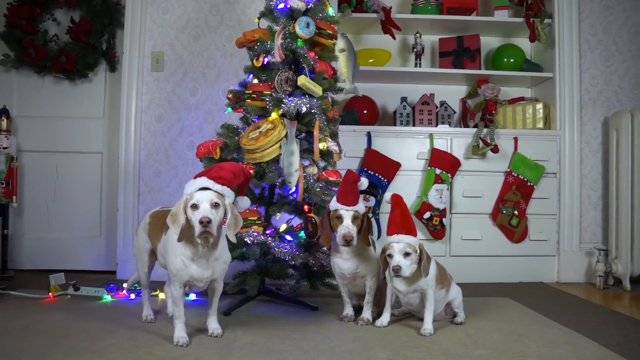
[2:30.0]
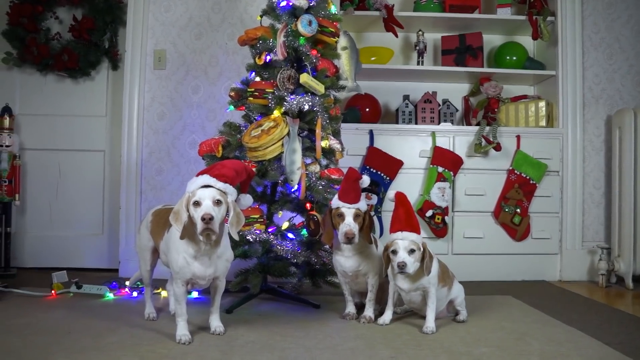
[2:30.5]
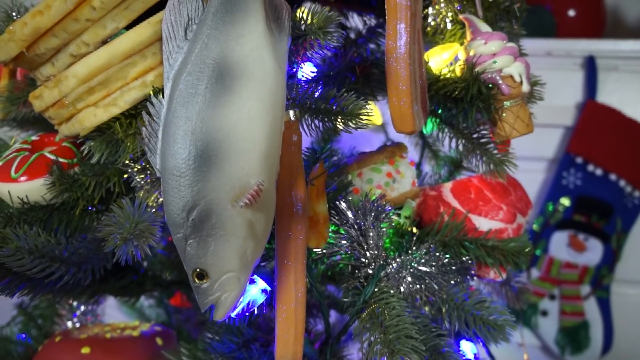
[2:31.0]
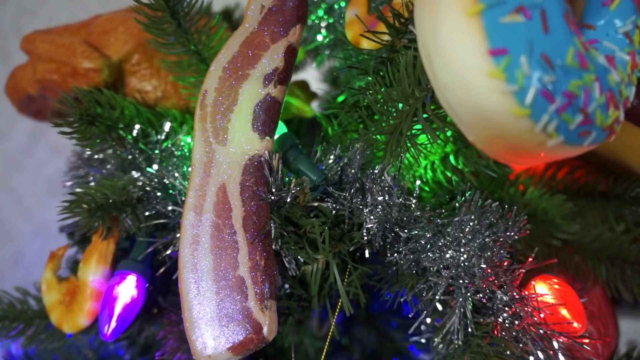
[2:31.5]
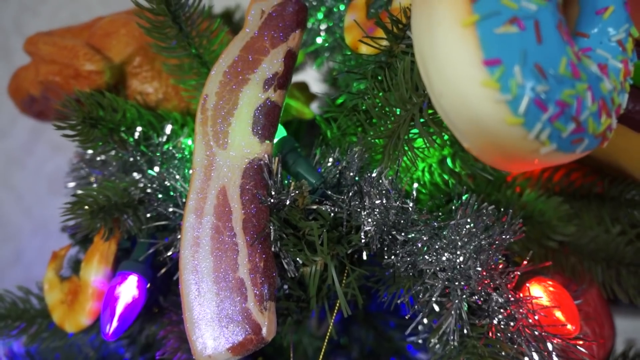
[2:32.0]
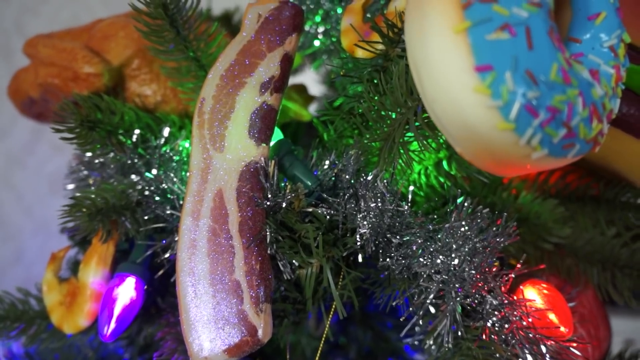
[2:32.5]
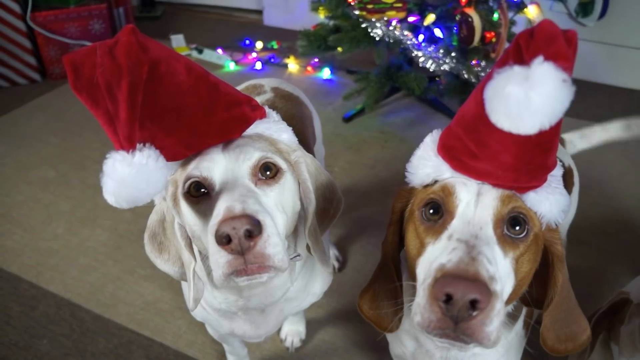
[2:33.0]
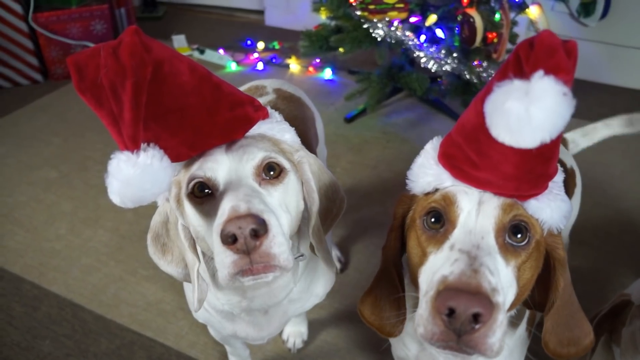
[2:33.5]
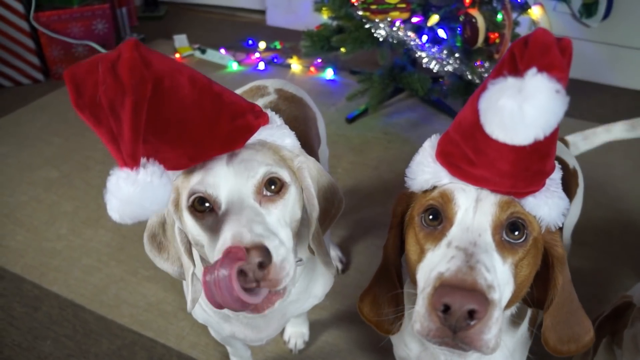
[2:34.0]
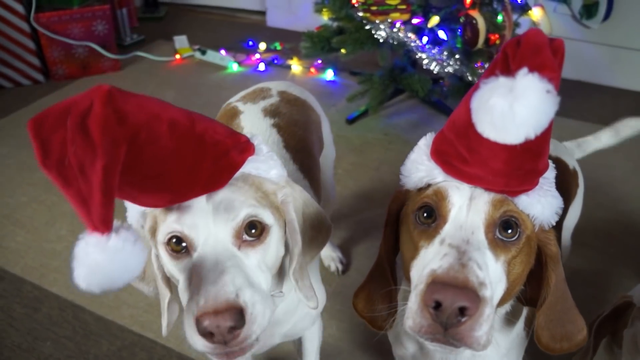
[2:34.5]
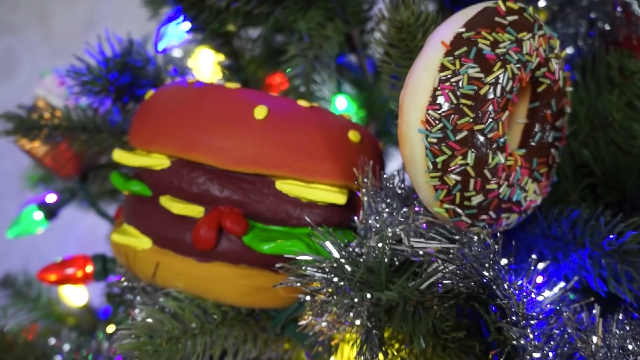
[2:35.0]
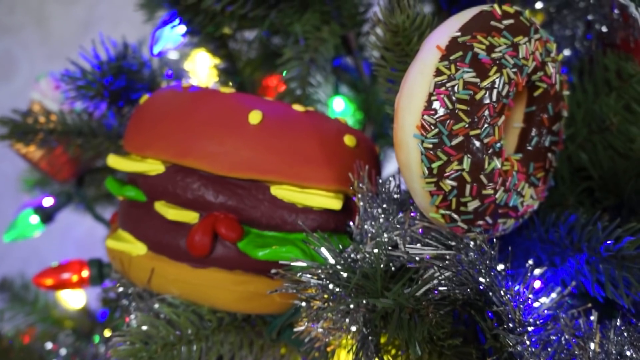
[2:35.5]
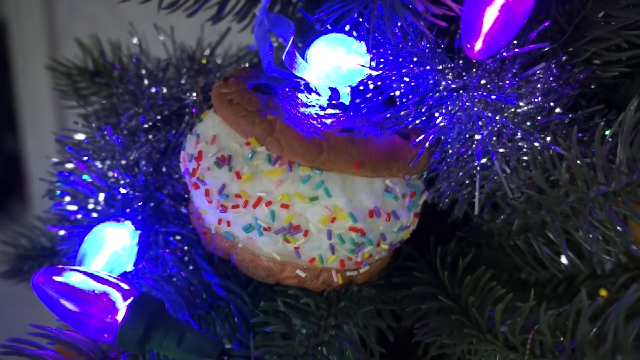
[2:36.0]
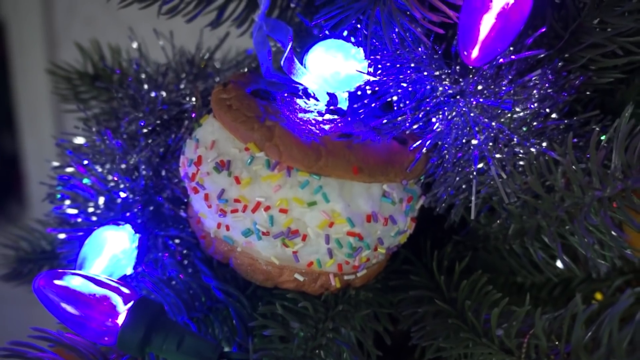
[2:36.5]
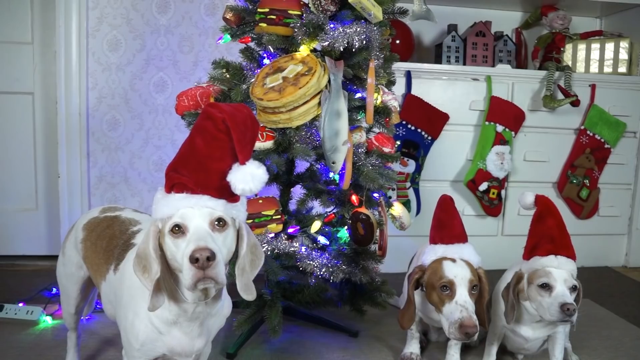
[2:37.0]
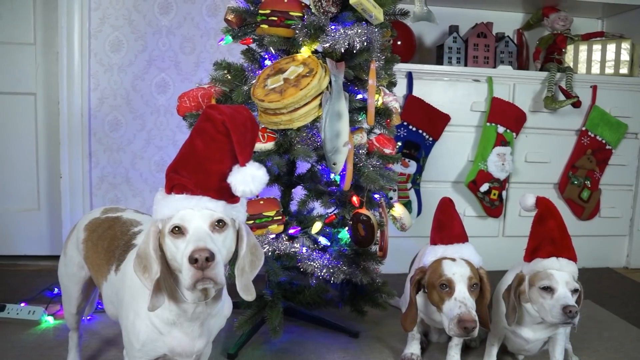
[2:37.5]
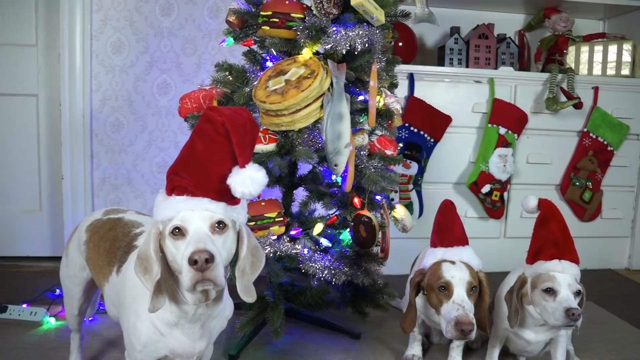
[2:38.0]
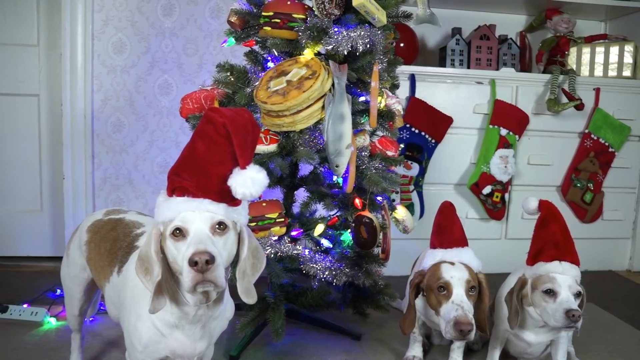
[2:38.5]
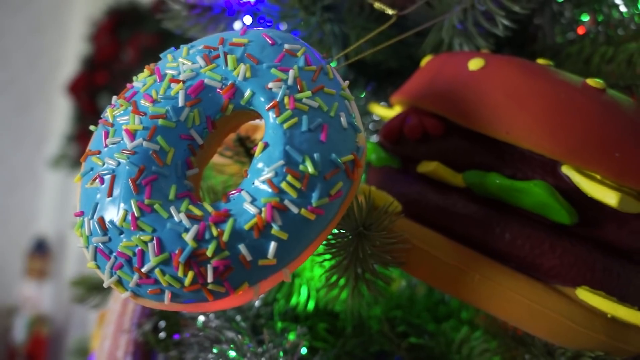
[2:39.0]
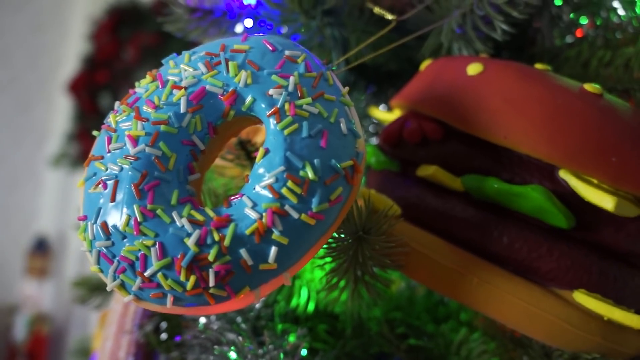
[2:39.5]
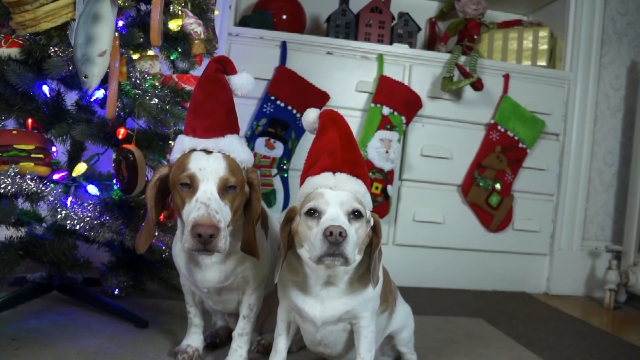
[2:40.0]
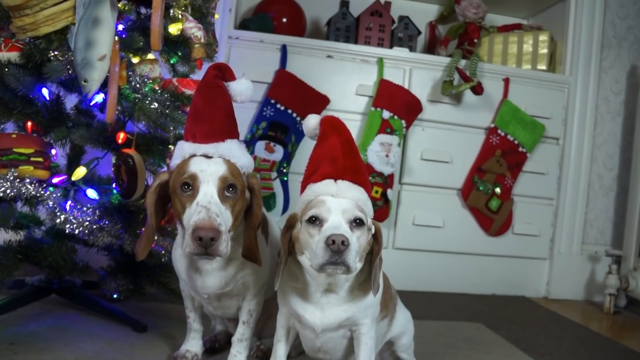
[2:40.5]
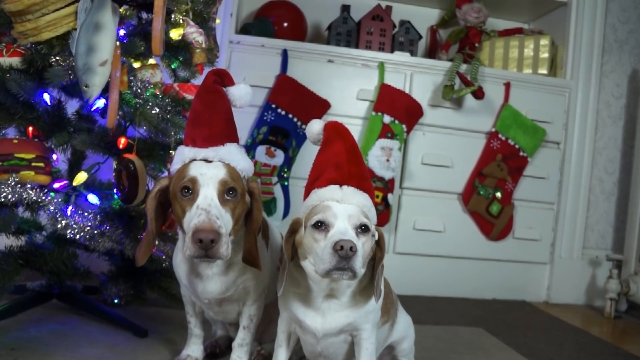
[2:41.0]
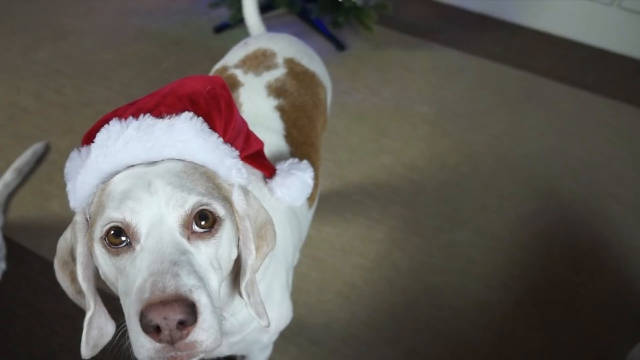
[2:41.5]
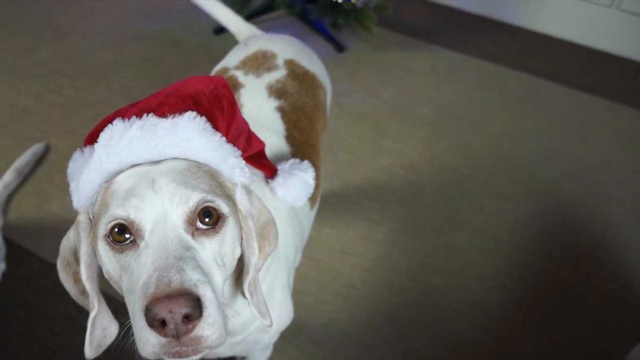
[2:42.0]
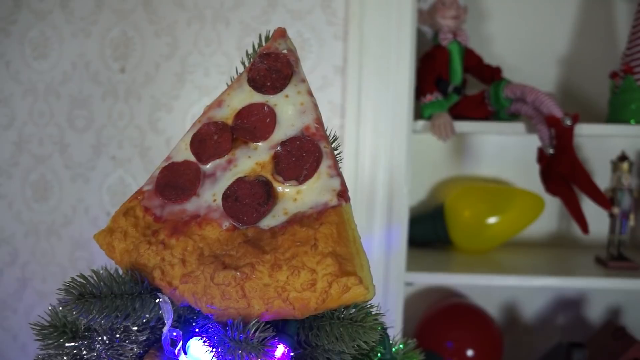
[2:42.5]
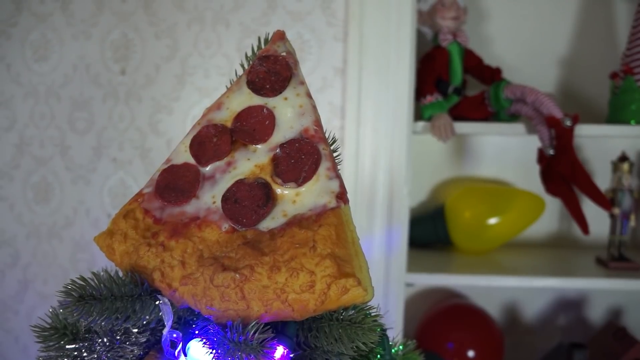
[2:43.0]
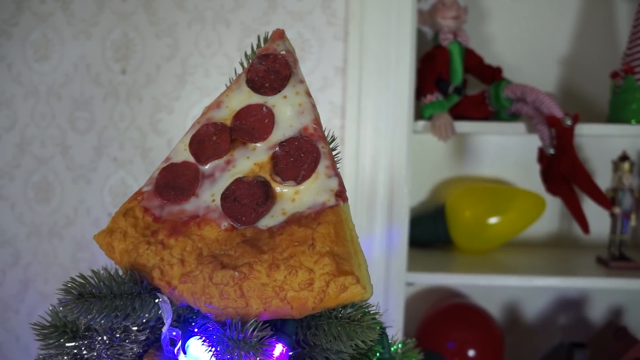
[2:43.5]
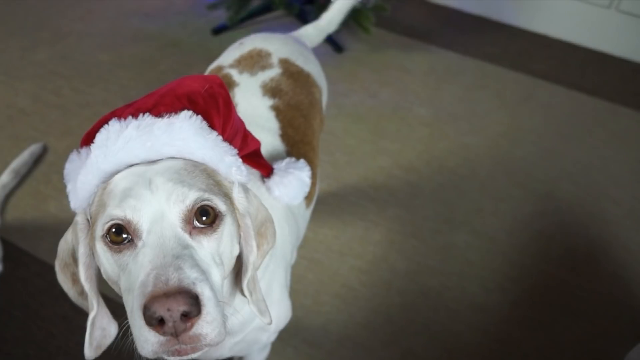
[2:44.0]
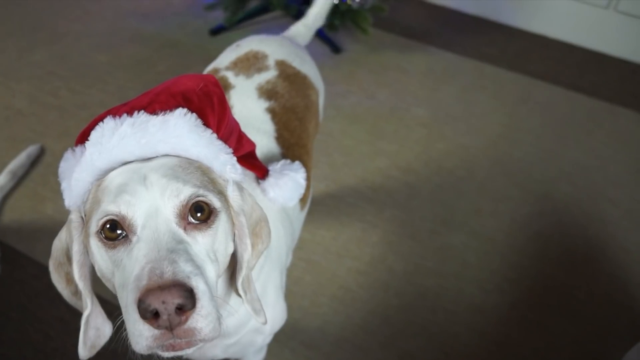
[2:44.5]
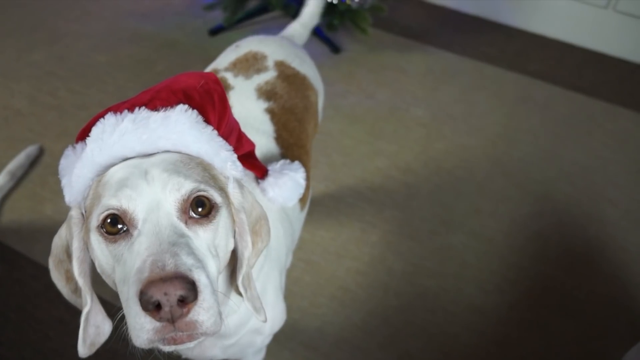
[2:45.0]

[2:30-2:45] The dogs sit together and look like they are looking up. There is one bigger dog on the left and two smaller dogs, all wearing matching Christmas hats, with their tails wagging. The tree has the slice of pepperoni pizza at the top where the star would be and is full of food: a slice of bacon, a cheeseburger, a donut with blue icing, one with chocolate icing, a whole turkey, a fish hanging off it, and ice cream.